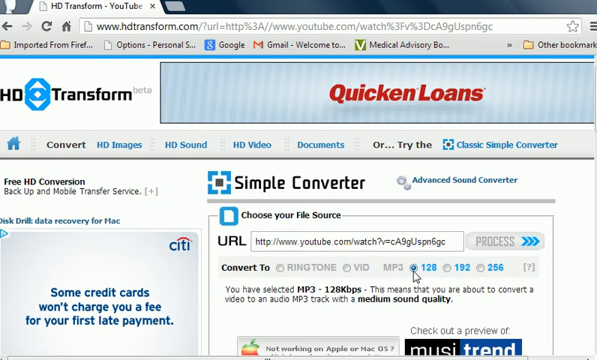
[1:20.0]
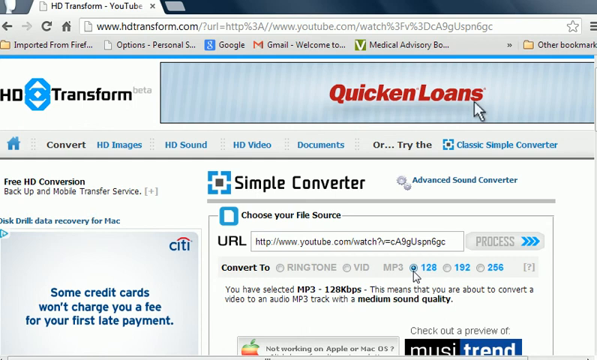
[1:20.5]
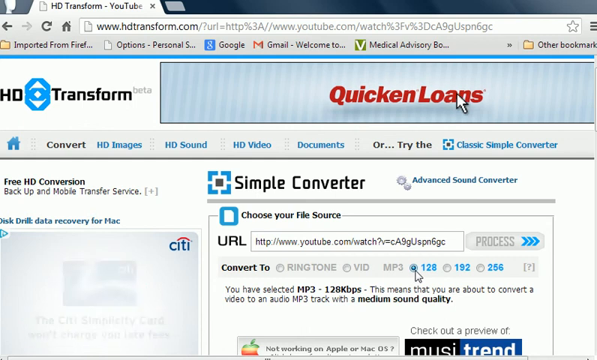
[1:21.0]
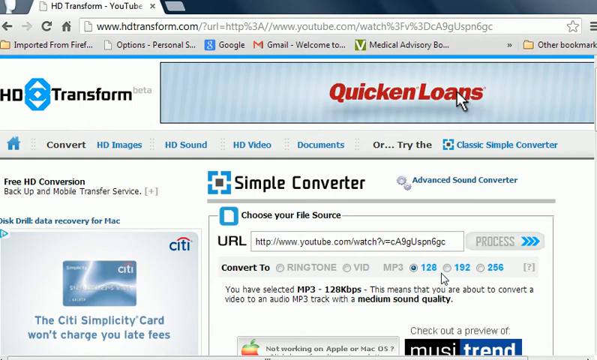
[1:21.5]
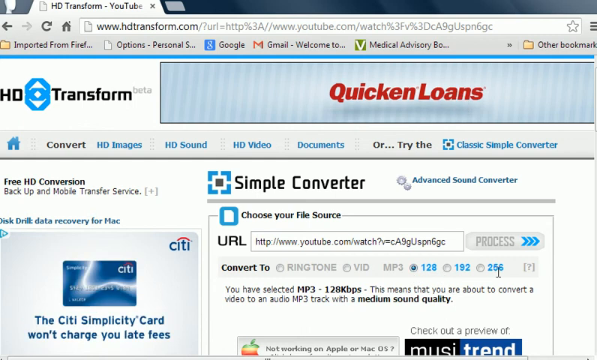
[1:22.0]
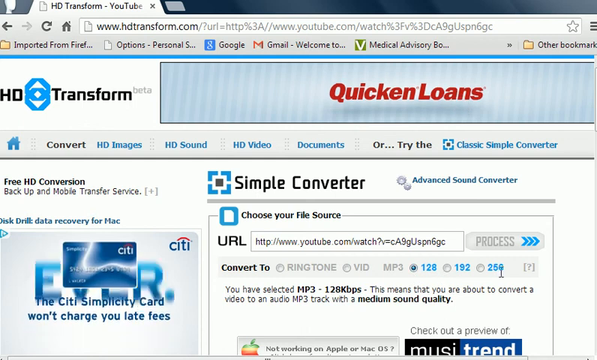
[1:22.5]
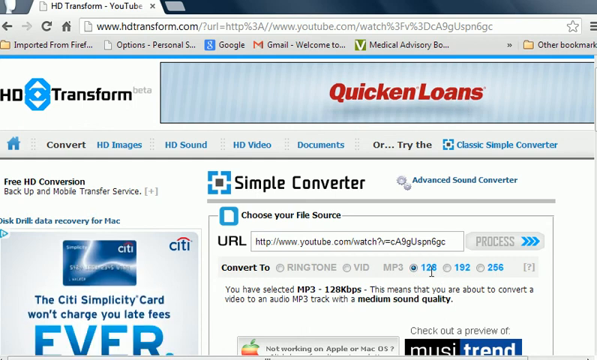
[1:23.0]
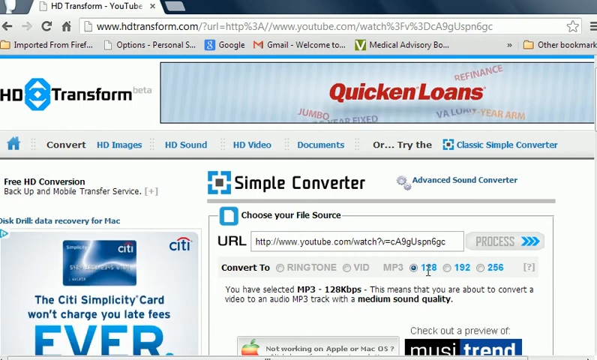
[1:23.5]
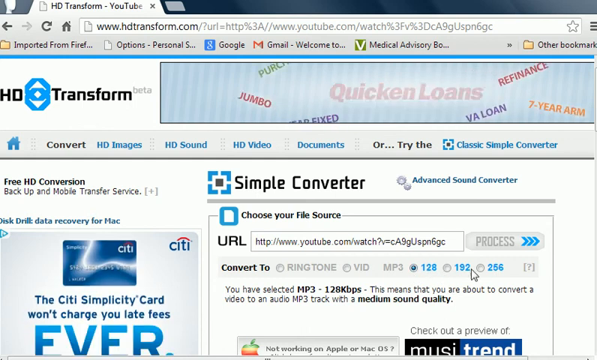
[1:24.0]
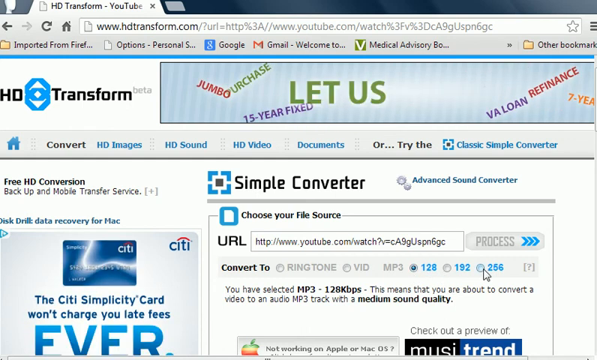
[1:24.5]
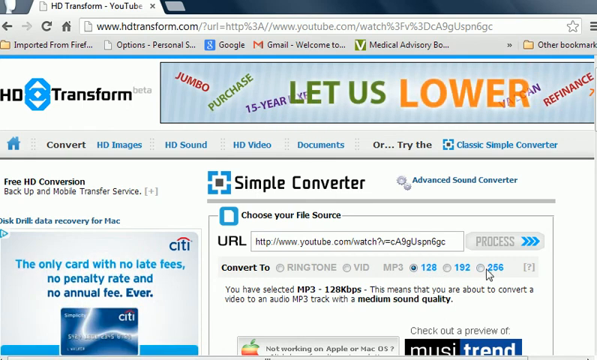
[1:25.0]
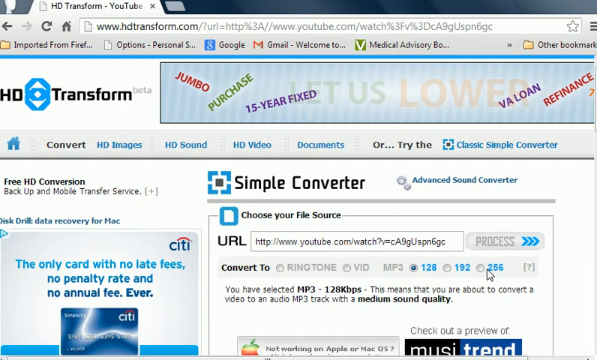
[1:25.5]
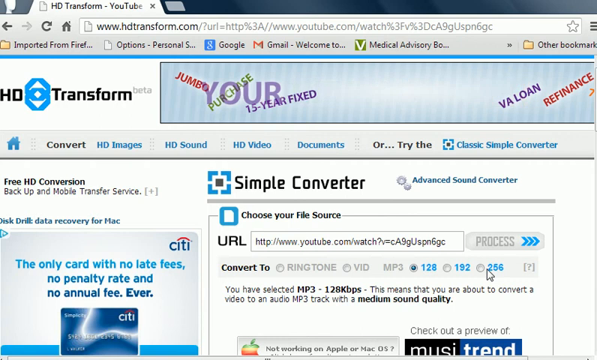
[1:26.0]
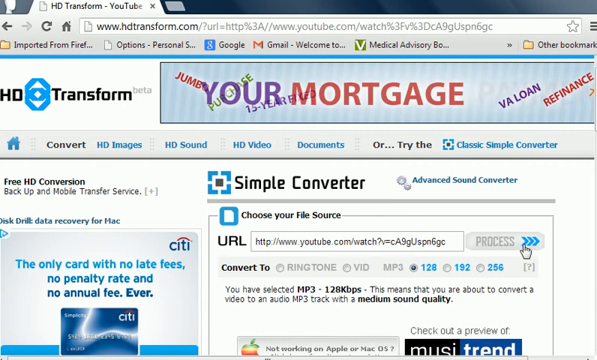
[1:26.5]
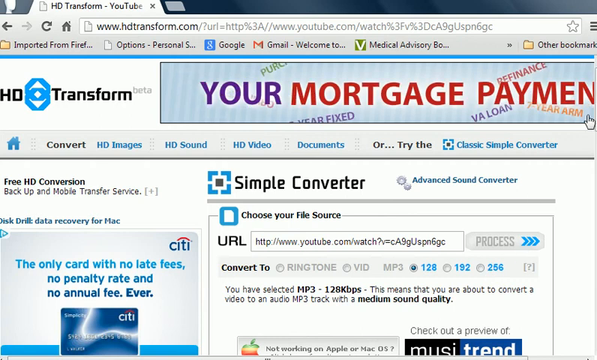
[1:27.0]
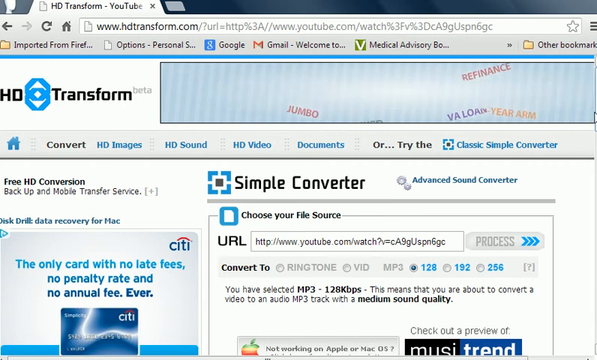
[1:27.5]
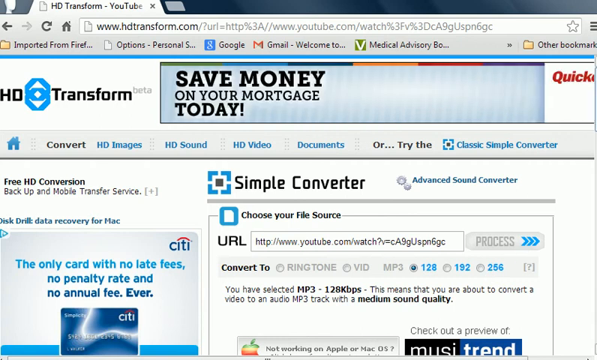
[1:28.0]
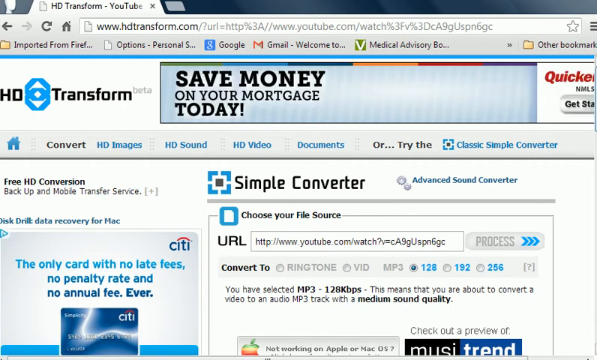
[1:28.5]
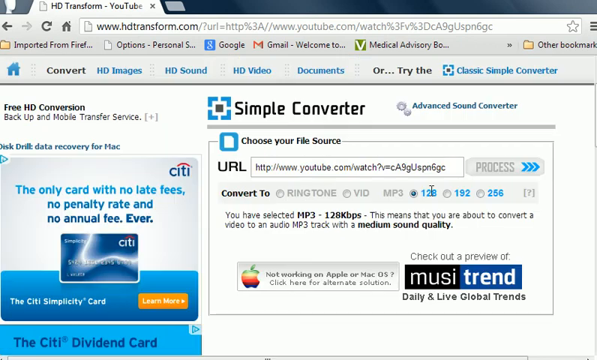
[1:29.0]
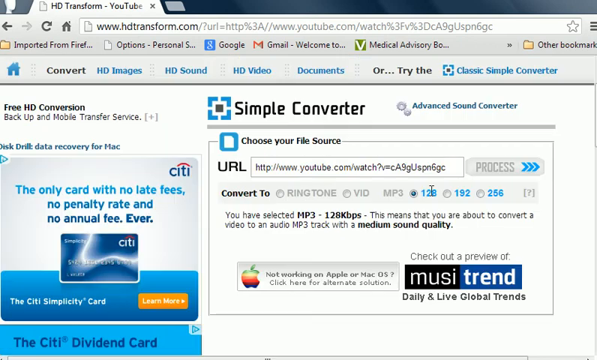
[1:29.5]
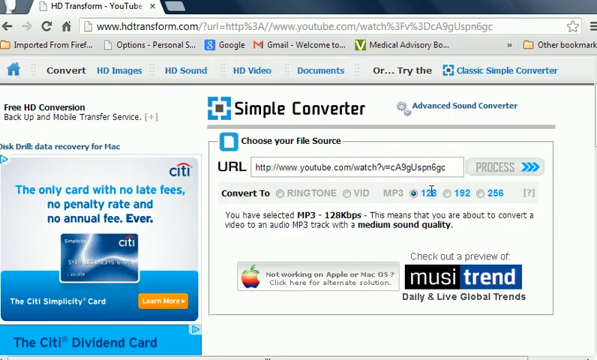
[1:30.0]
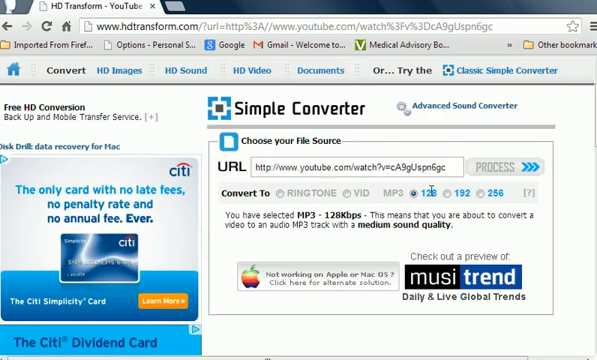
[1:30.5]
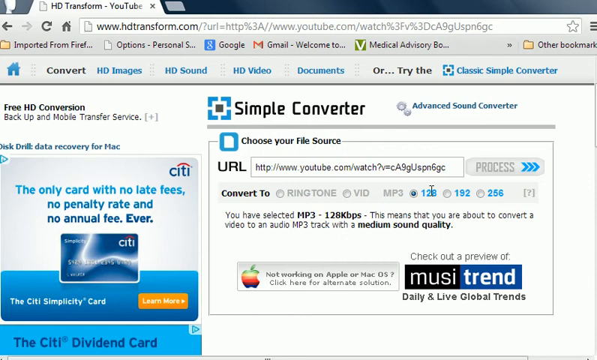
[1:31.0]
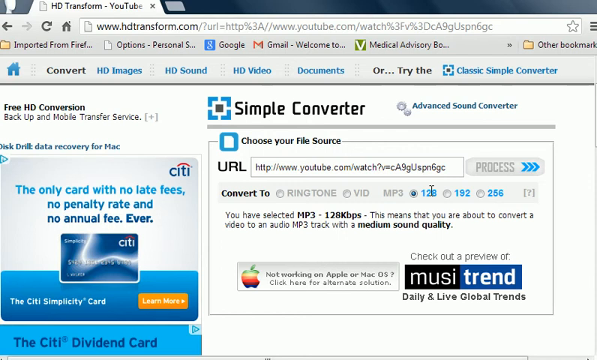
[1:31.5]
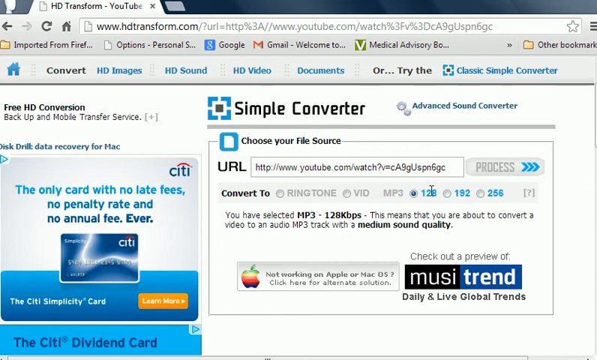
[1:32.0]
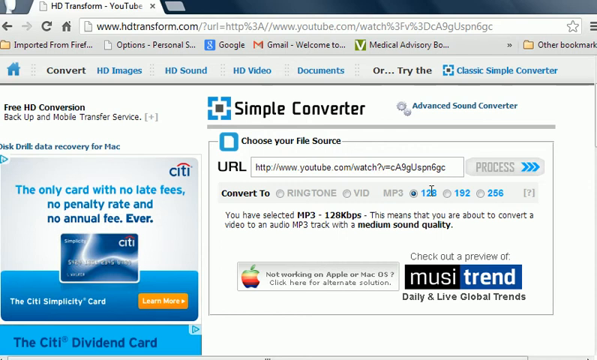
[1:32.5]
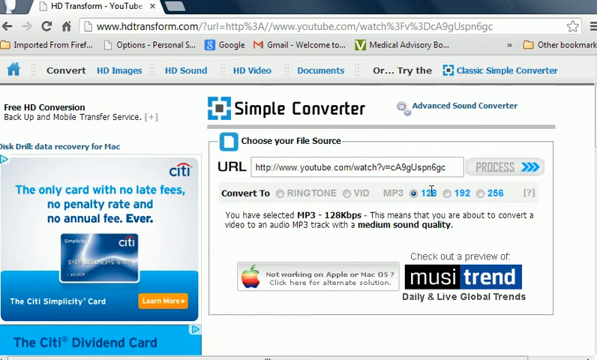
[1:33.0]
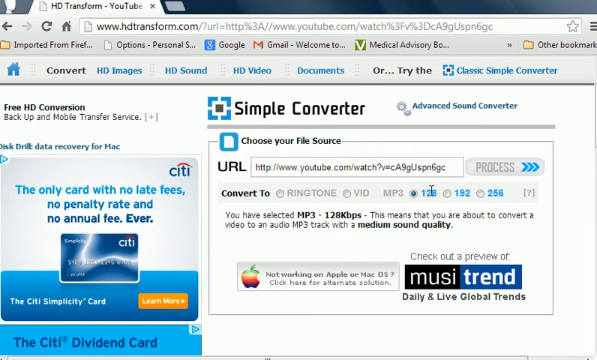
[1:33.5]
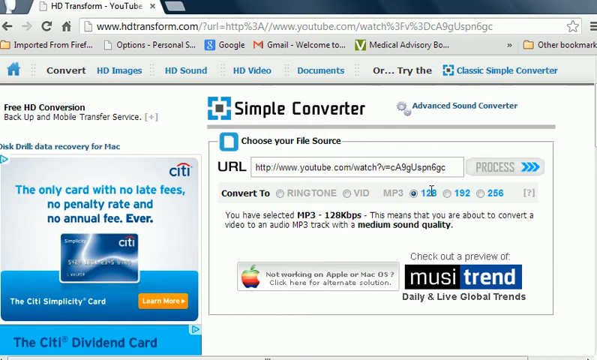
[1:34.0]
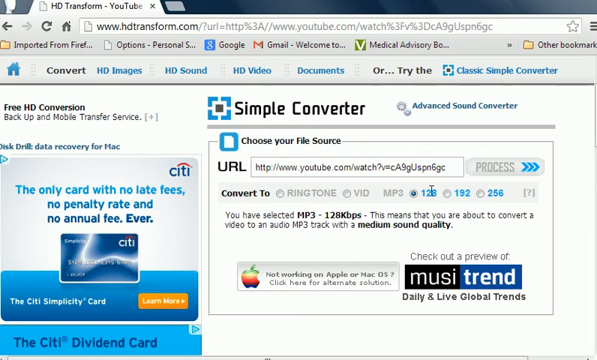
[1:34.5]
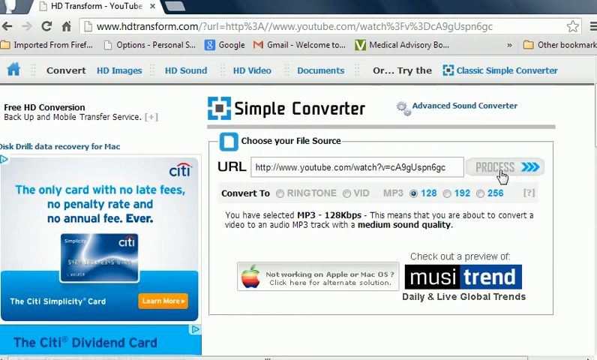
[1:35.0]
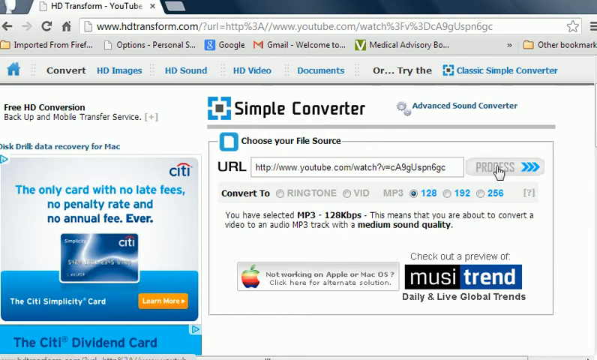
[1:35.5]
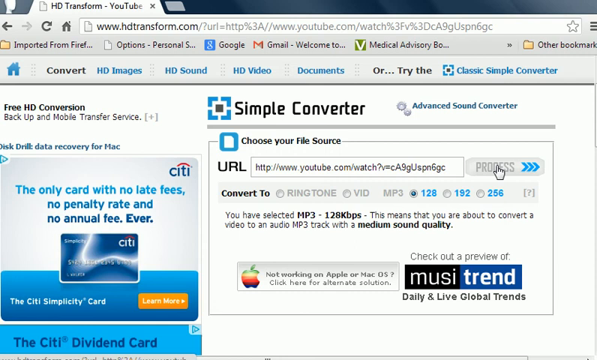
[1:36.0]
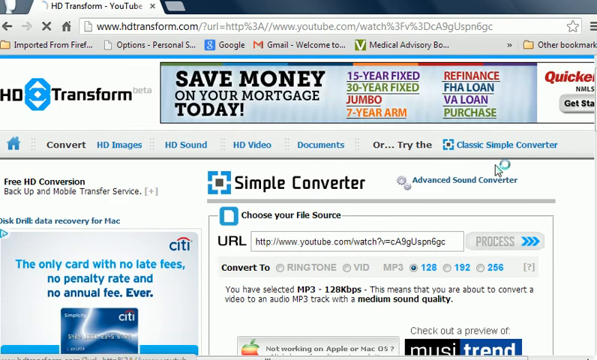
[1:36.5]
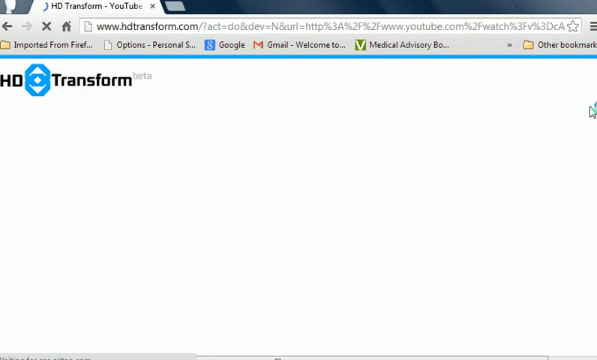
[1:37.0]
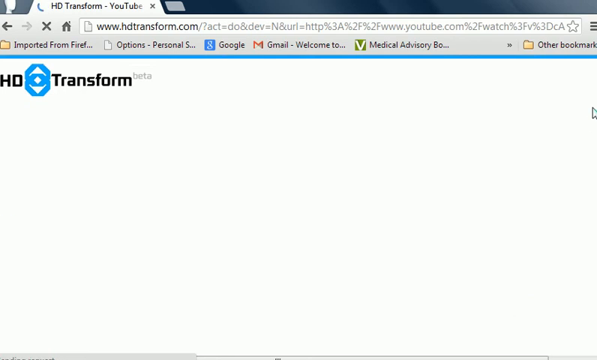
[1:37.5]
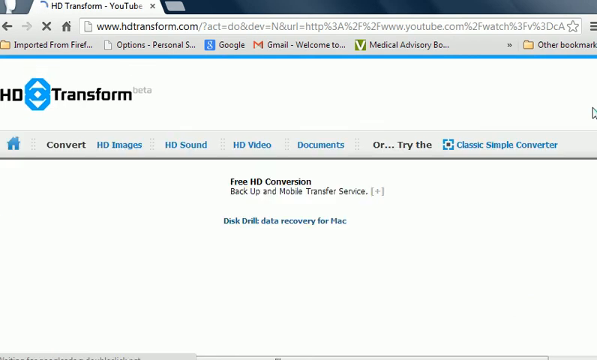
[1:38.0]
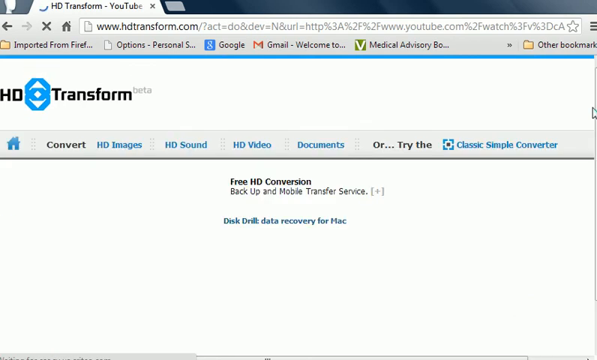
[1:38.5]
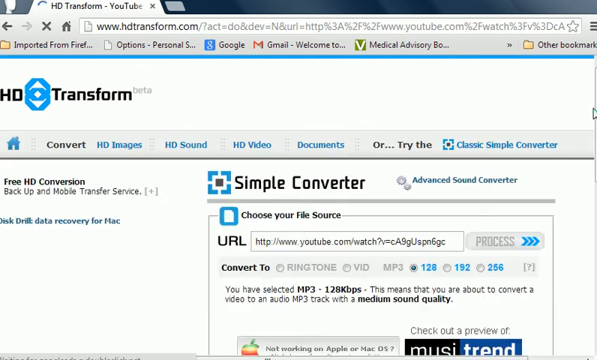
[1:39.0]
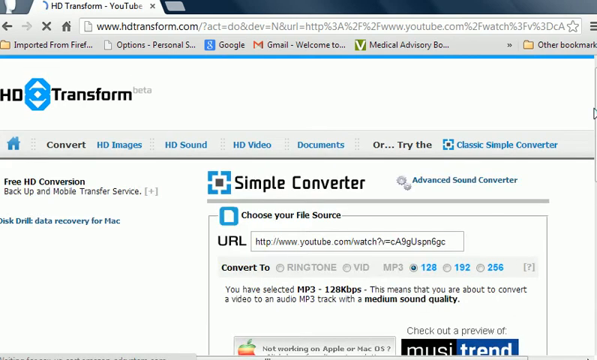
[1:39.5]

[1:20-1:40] The HD Transform website has a video banner ad for Quicken Loans at the top, to the right of the HD Transform logo, which includes the text "beta." The mouse hovers over the radio buttons in the "Convert To" group, where "128" is selected. The mouse moves up and clicks the "PROCESS" button to the right of the input text box containing the YouTube video URL. A new page loads reading "Free HD Conversion, Backup and Mobile Transfer Service" in black text, with a link below it reading "Disk Drill, Data Recovery for Mac" in bold blue text. This time there is no ad at the top of the screen. The same navbar menu has the options home (a house icon), "Convert," "HD Images," "HD Sound," "HD Video," "Documents," and "Or... Try the Classic Simple Converter."